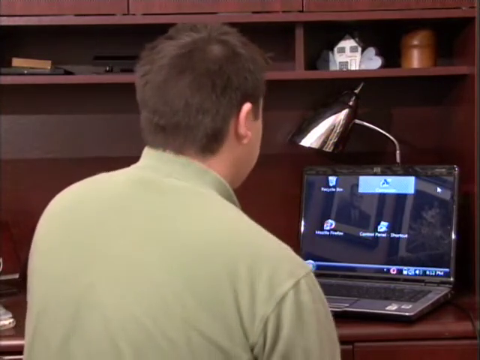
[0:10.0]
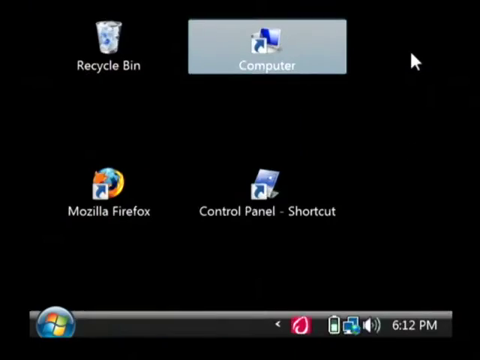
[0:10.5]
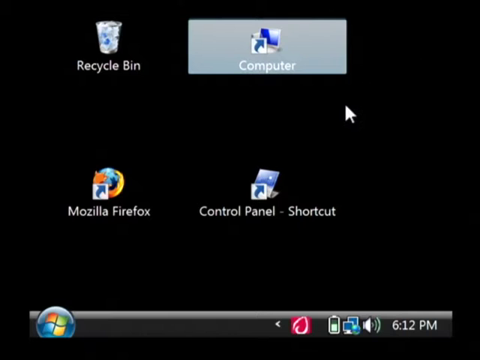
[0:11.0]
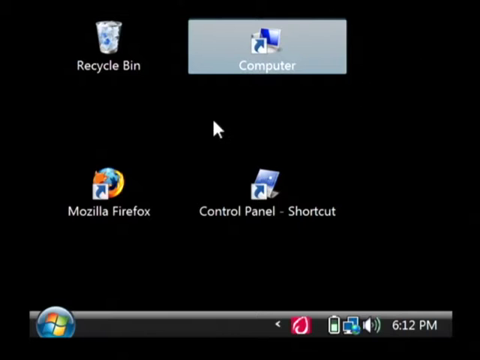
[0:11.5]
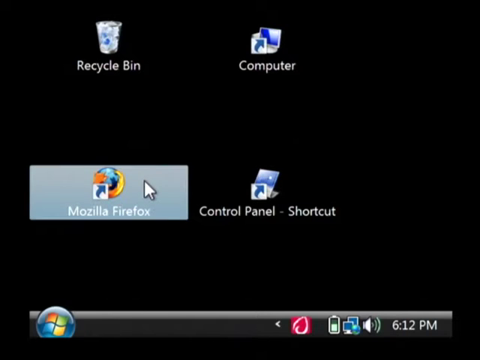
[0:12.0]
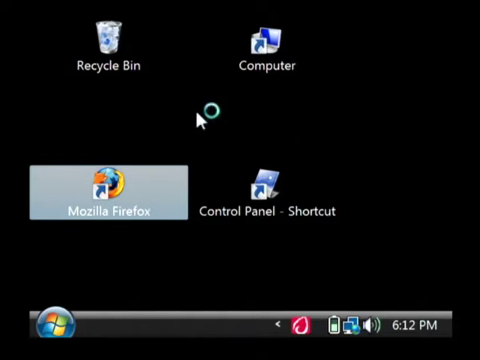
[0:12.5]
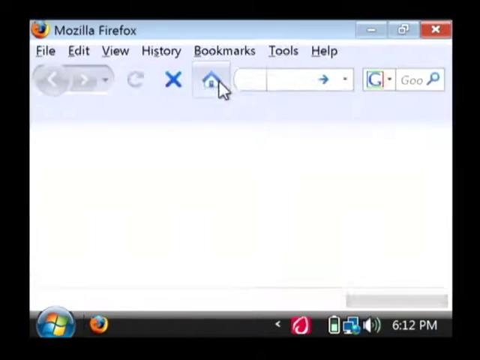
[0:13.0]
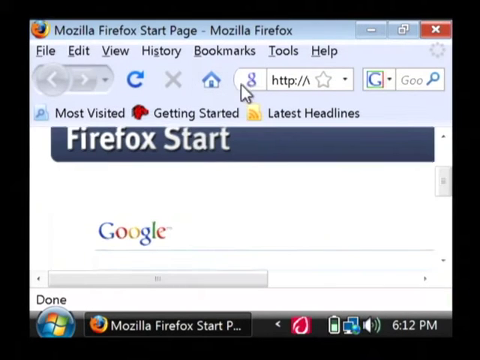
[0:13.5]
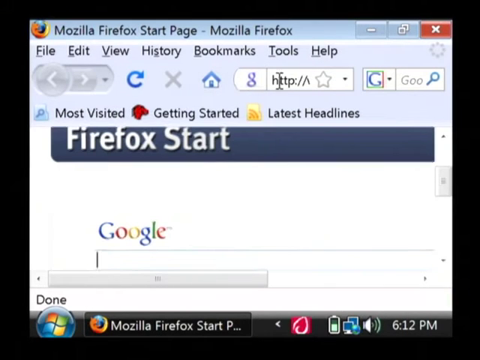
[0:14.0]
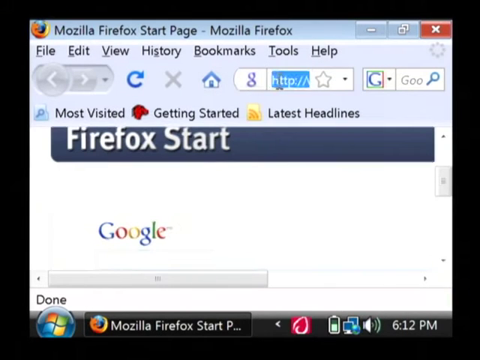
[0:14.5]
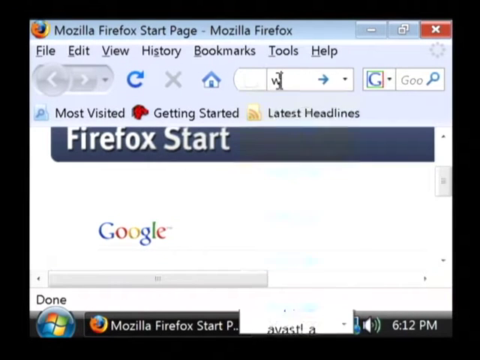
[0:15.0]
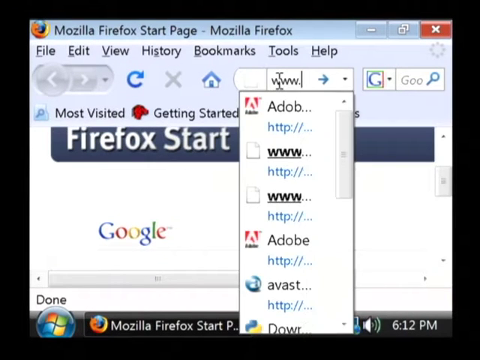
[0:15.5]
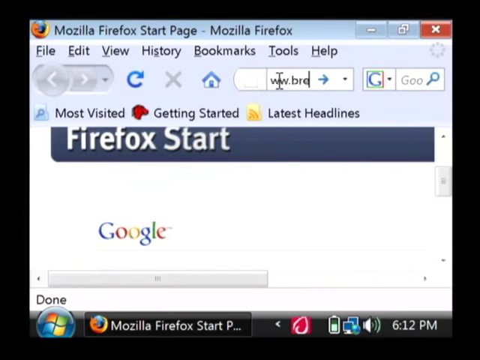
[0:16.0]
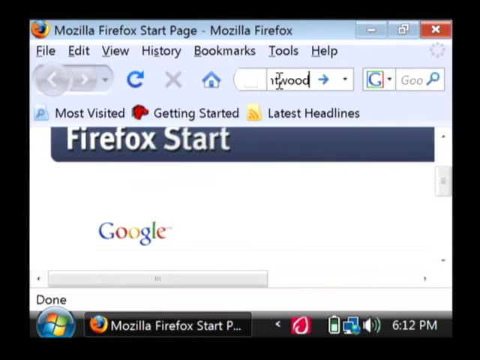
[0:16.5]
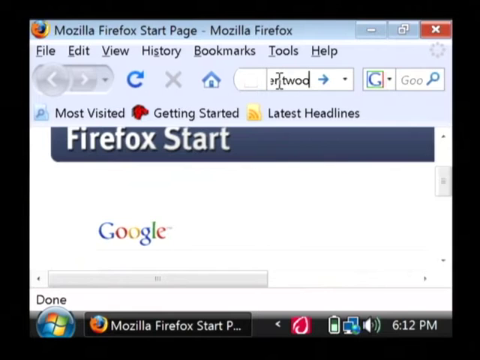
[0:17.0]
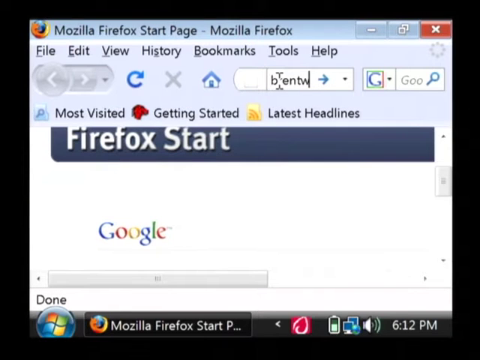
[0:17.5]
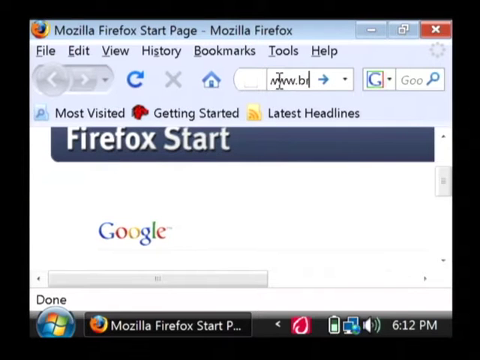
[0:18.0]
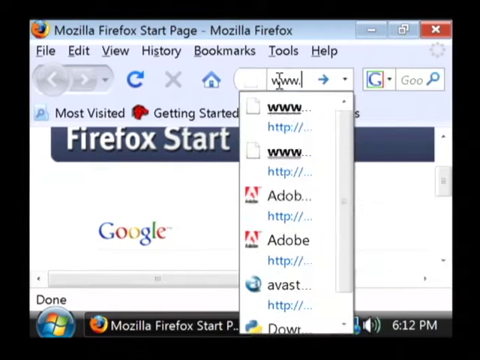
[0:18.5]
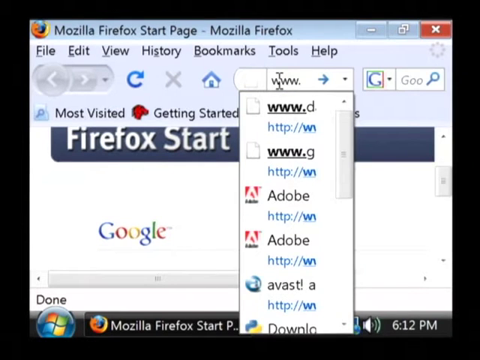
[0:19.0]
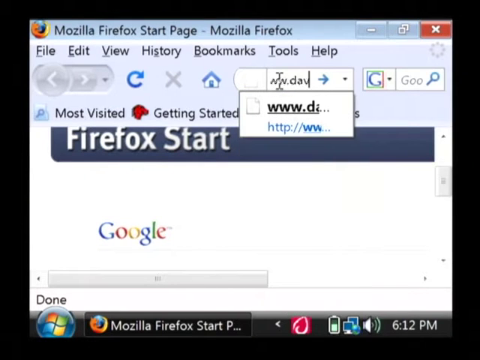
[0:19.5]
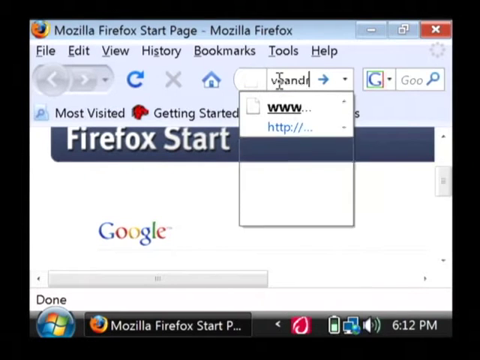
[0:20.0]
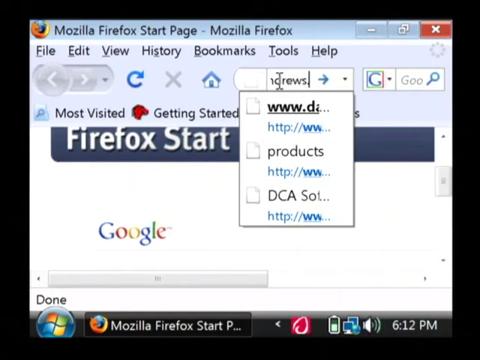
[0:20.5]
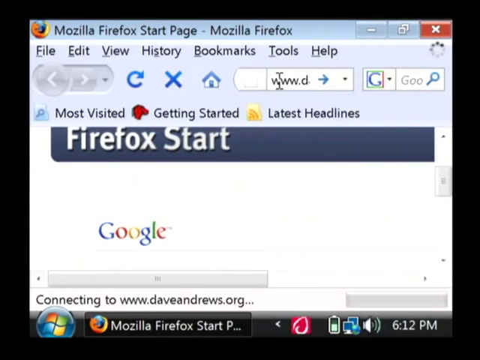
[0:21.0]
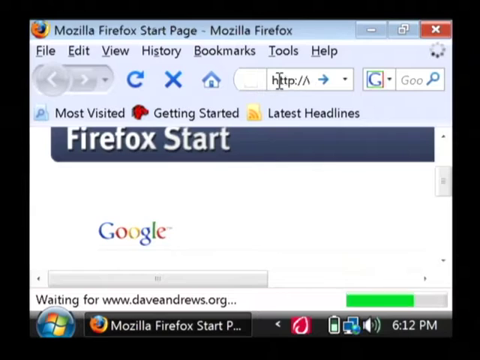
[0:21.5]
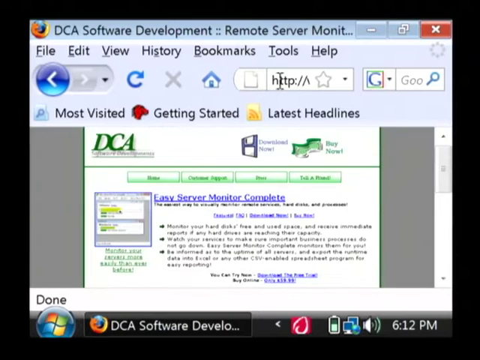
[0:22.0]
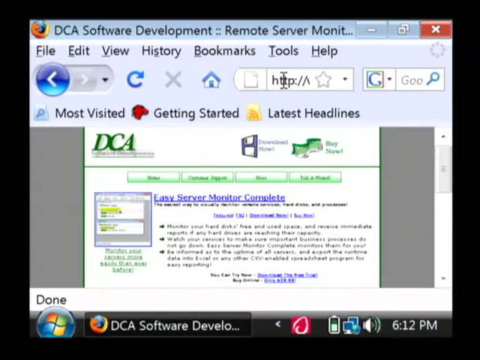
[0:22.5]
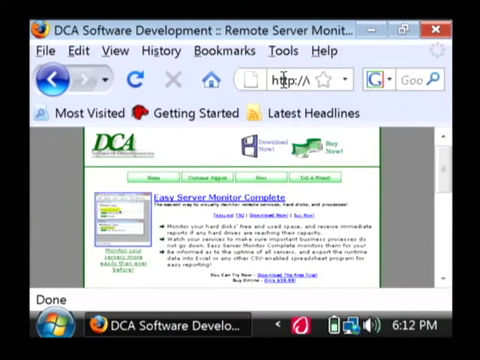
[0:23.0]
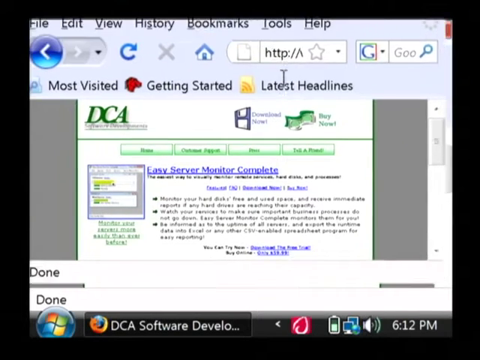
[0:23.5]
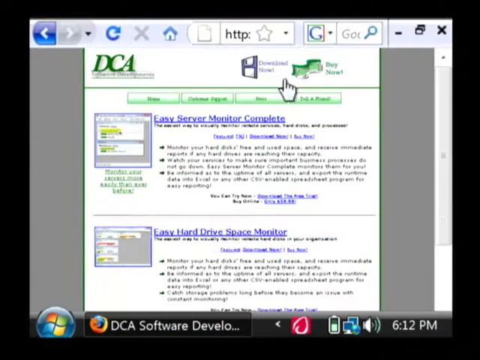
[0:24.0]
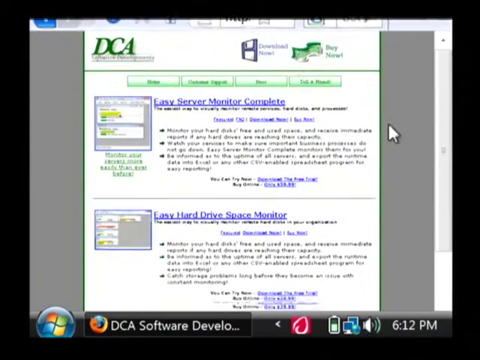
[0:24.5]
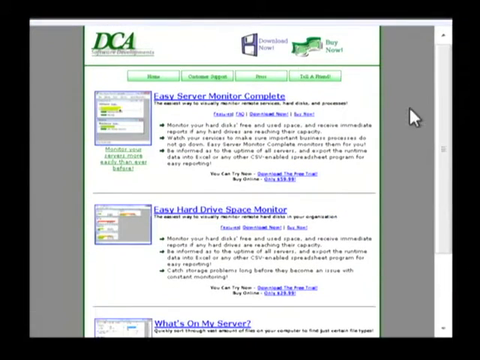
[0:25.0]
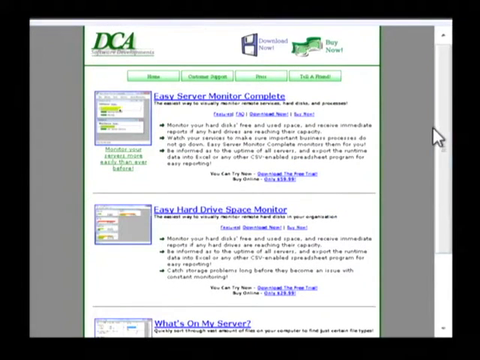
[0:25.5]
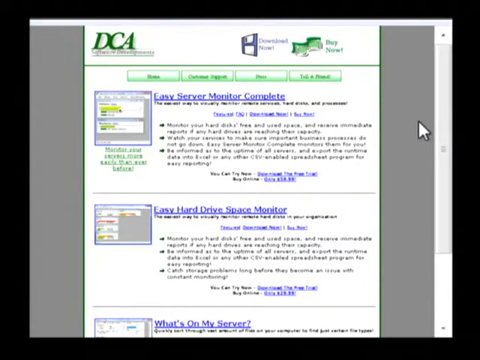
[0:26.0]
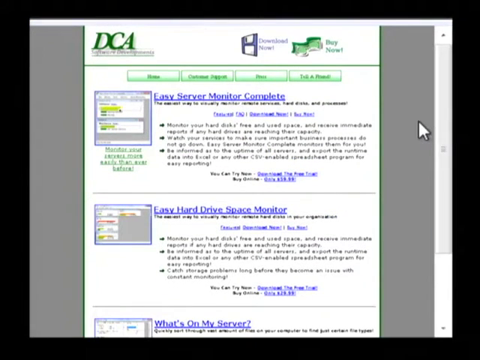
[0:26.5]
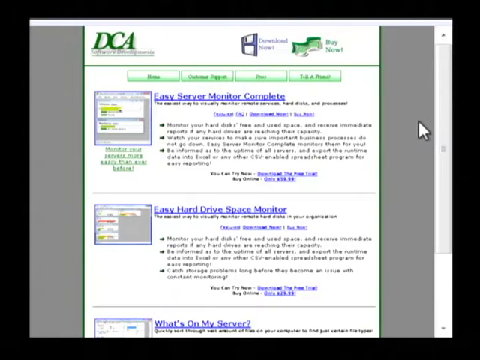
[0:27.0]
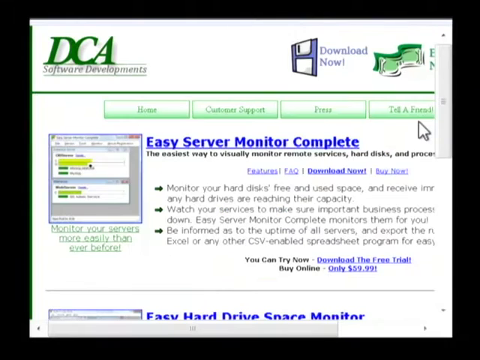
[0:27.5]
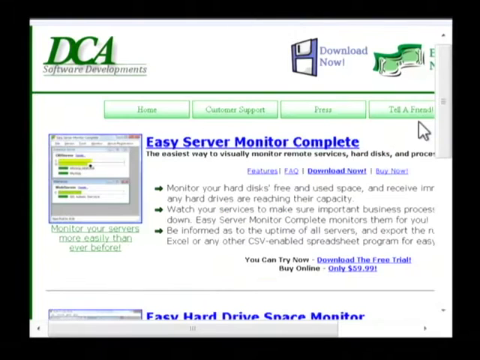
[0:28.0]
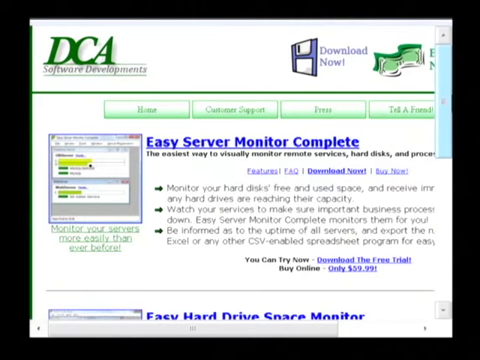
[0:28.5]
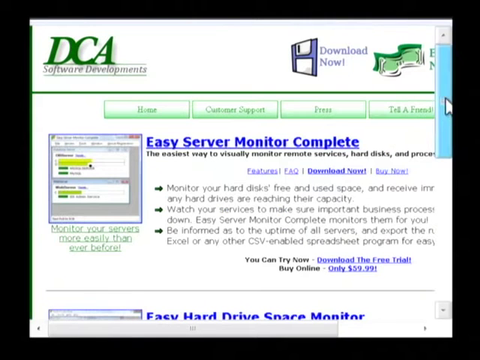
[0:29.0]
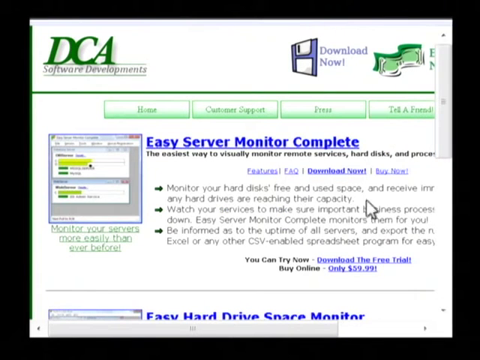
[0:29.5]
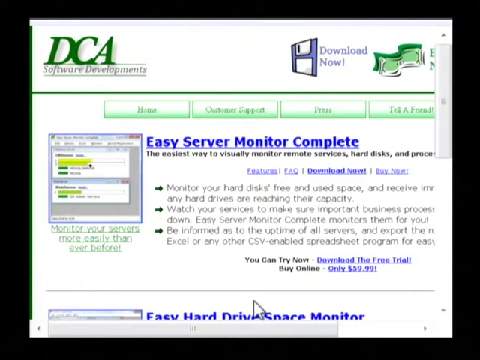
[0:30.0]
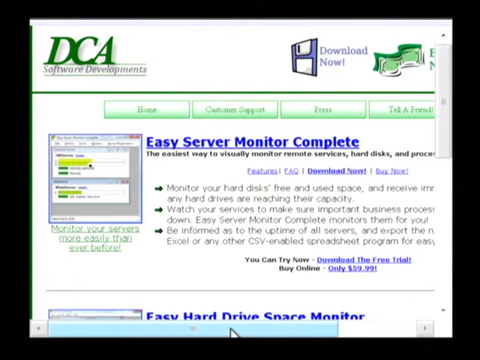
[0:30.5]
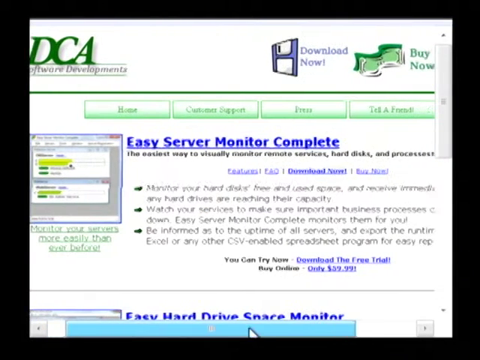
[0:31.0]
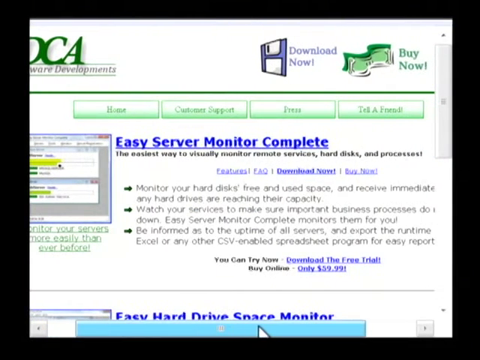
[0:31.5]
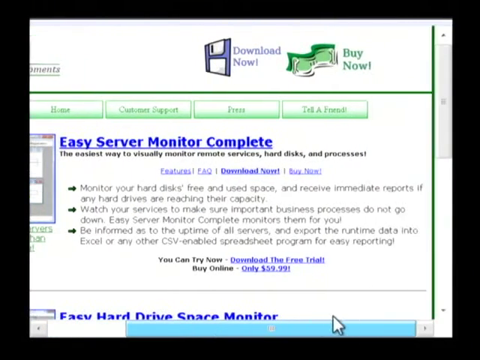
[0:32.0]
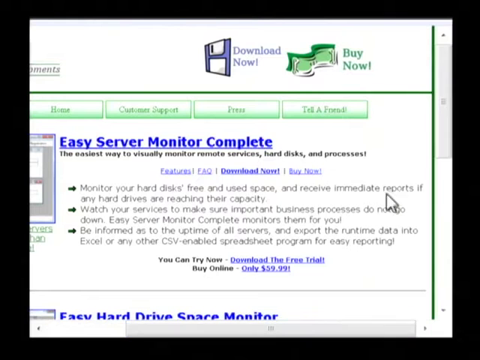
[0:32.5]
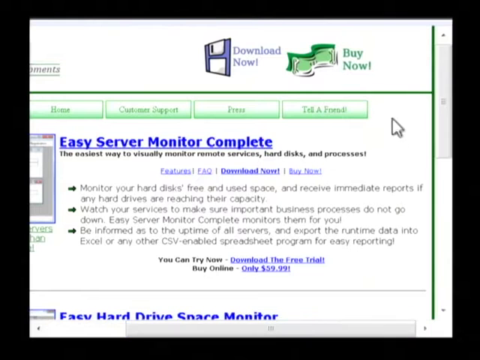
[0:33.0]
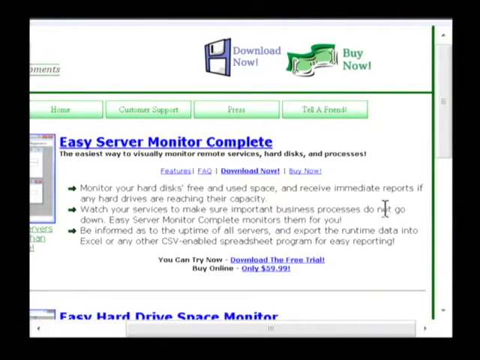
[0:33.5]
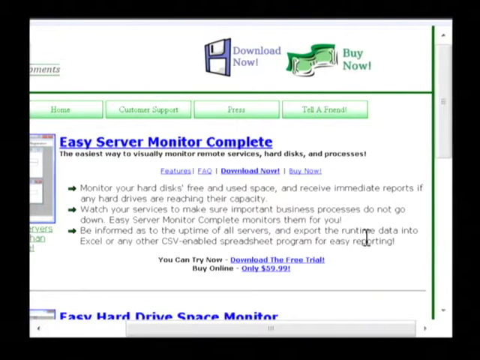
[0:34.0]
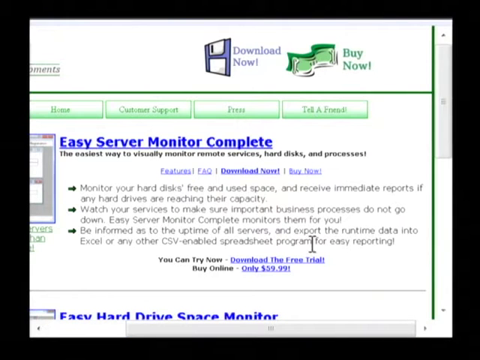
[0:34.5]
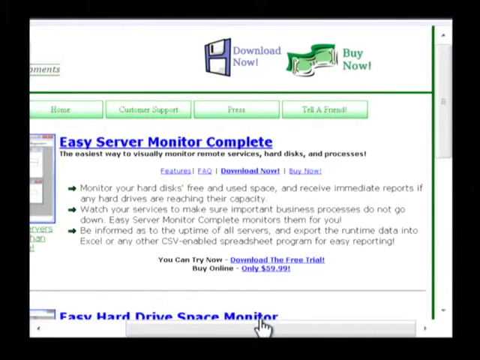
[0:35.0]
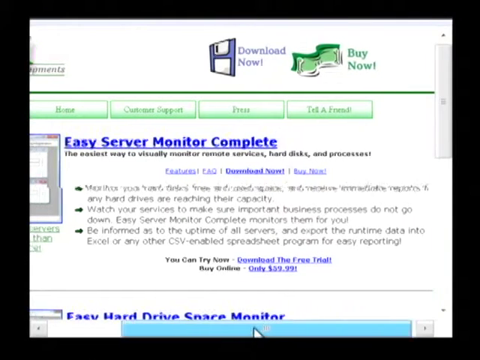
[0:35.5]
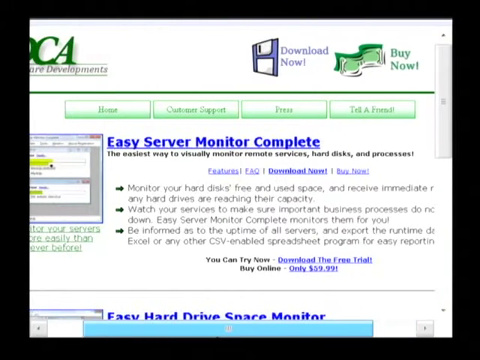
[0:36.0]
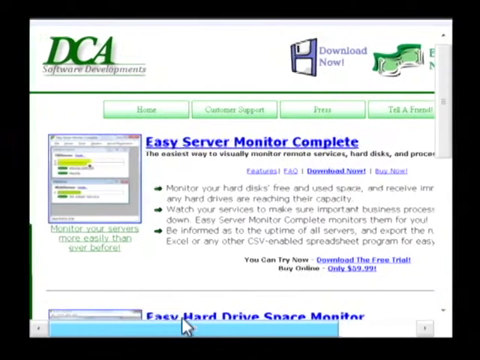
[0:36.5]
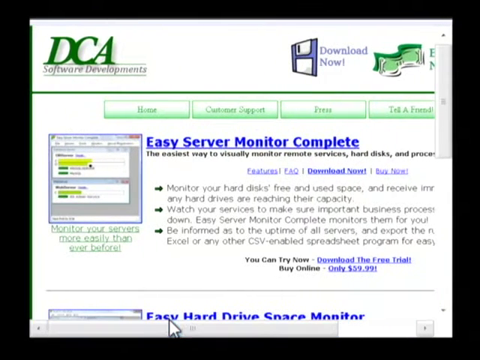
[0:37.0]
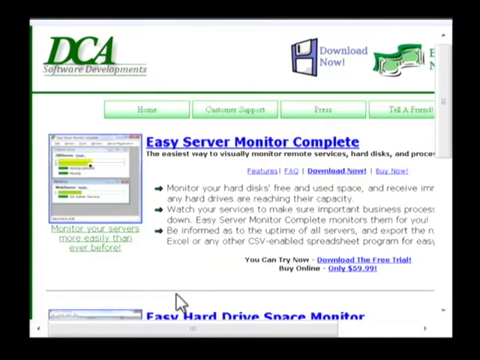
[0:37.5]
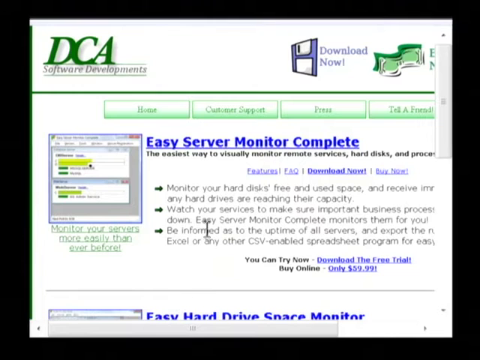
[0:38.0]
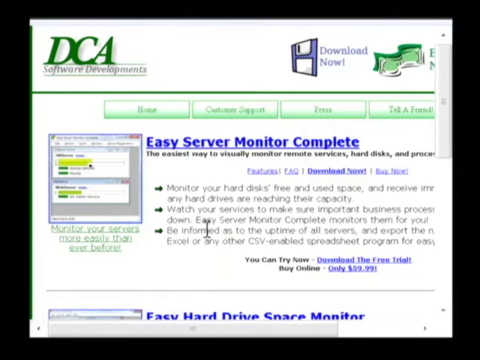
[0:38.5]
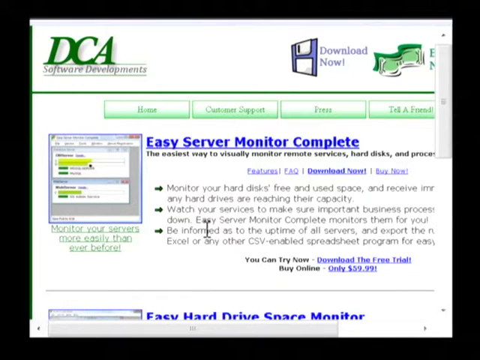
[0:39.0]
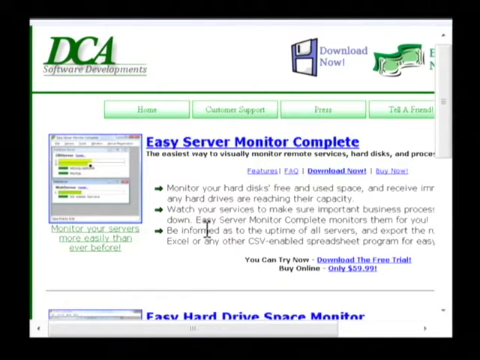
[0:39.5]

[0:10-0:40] A black screen shows desktop items: "Recycle Bin" at the top left, "Computer" at the top right, "Mozzarella Firefox" at the bottom left and "Control Panel Shortcut" at the bottom right. He clicks "Mozzarella Firefox" with his mouse, and a window opens with the start page. He clicks what looks like the home button, which brings up the Firefox start page with Google underneath the Firefox wording. He types "www.brentwood" into the search bar, and a drop-down box appears with lots of options to choose from. He clicks one of them and the page starts to load, taking him to a DCA page with "Easy Server Monitor Complete" as a title and "Easy Hard Drive Space Monitor" below it. He slides the bar to the right to show "Easy Server Monitor Complete" and then slides it back to the left.